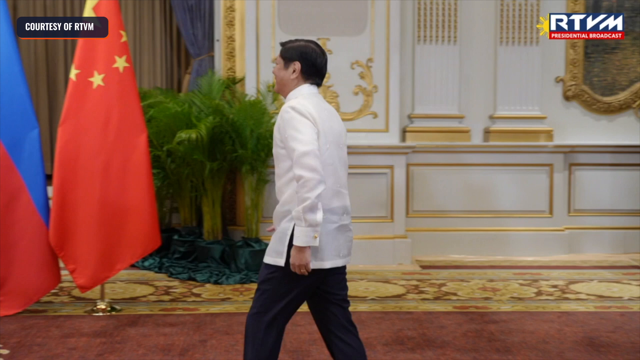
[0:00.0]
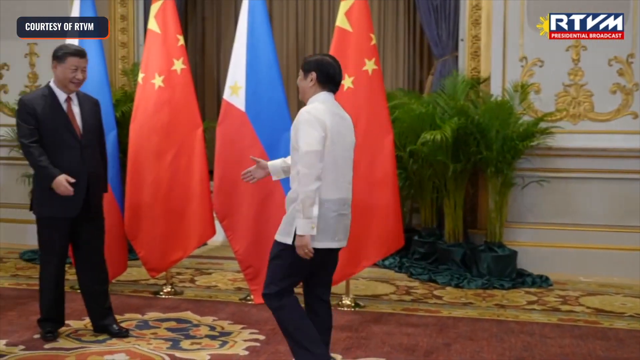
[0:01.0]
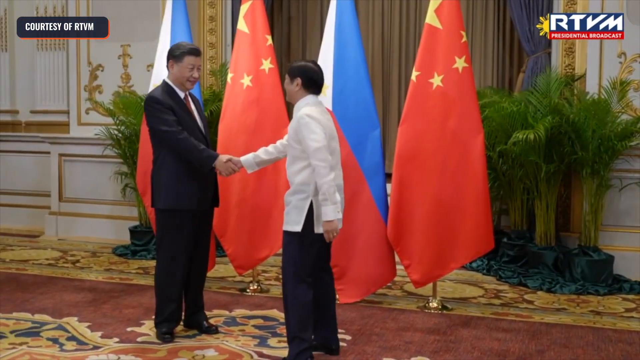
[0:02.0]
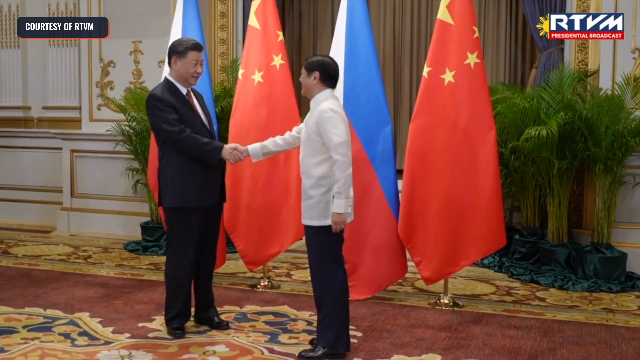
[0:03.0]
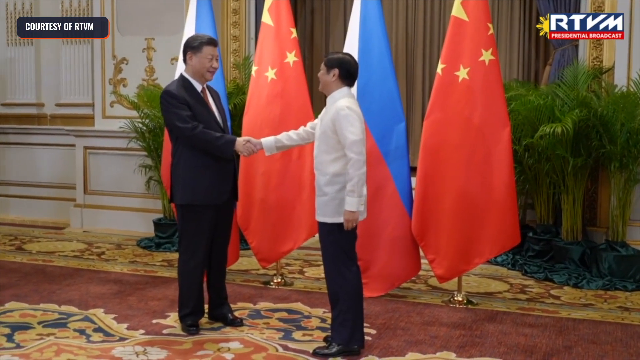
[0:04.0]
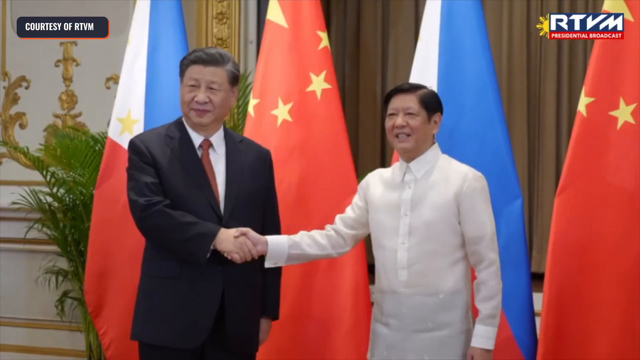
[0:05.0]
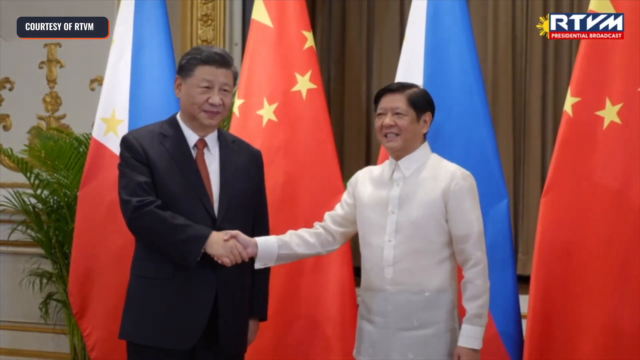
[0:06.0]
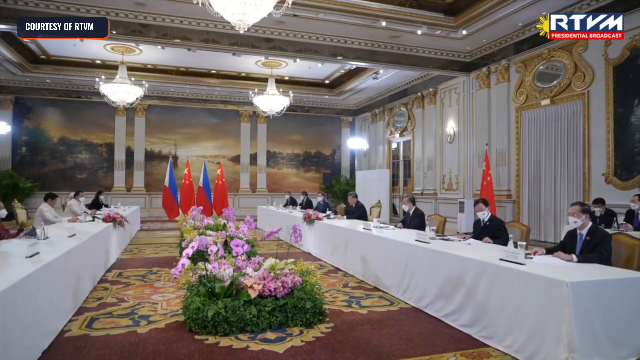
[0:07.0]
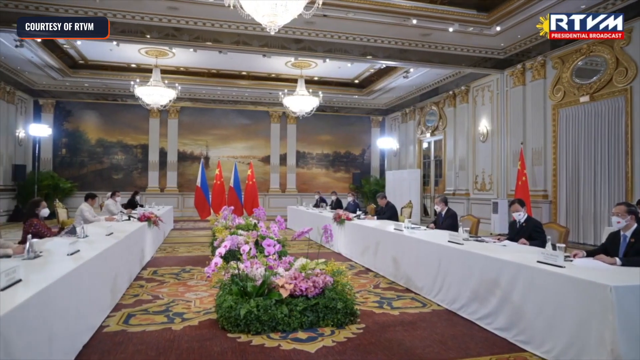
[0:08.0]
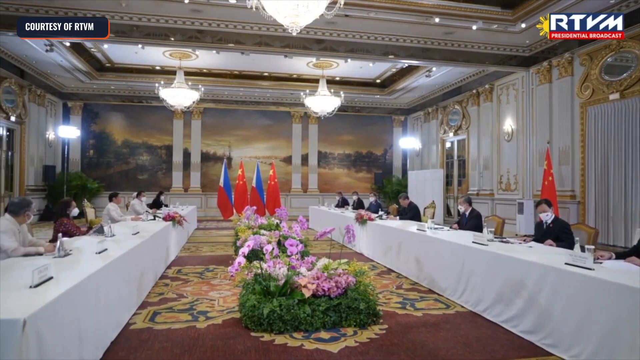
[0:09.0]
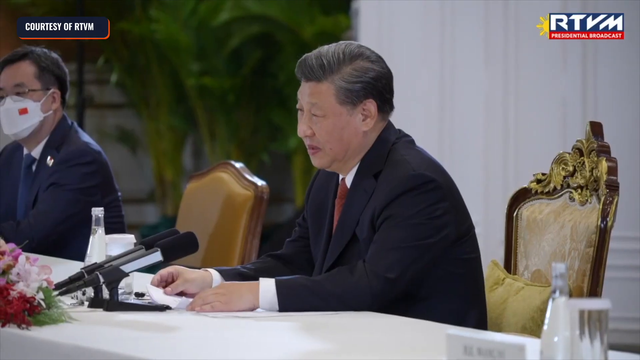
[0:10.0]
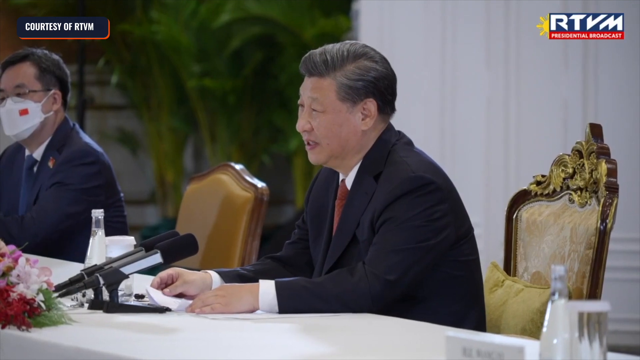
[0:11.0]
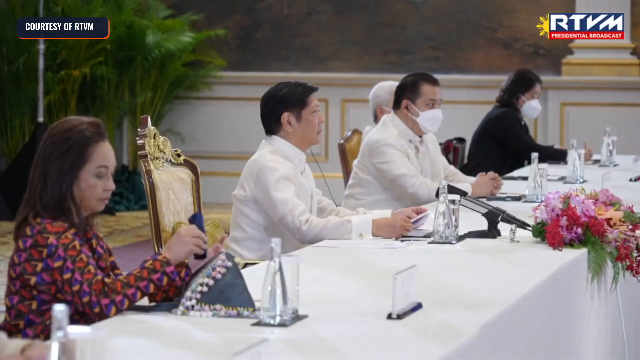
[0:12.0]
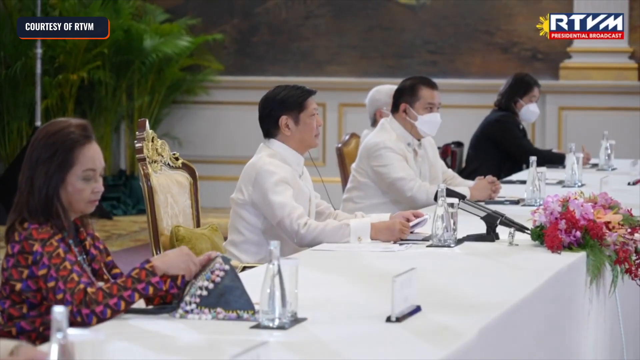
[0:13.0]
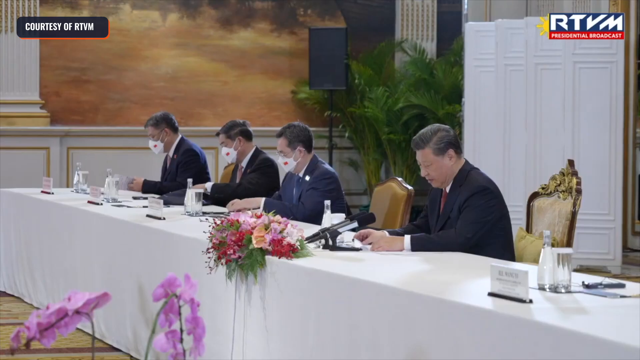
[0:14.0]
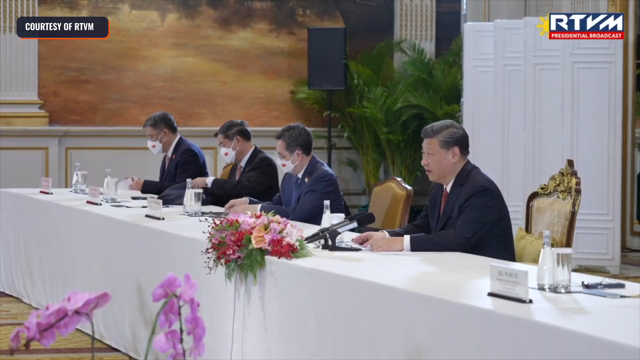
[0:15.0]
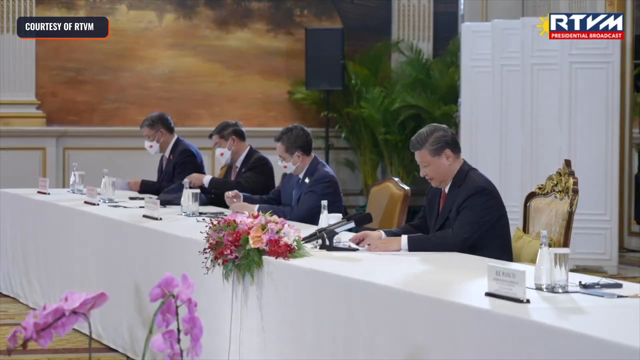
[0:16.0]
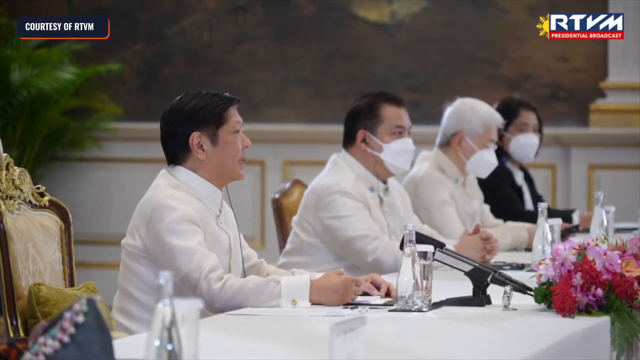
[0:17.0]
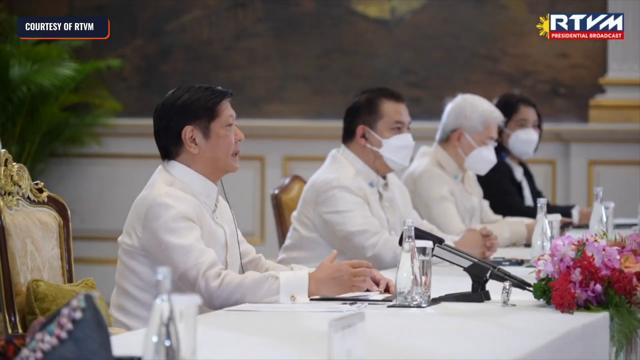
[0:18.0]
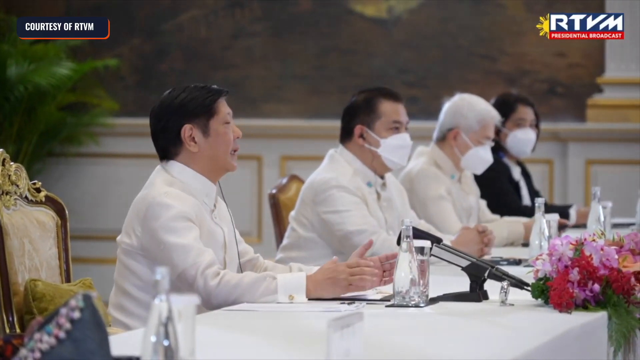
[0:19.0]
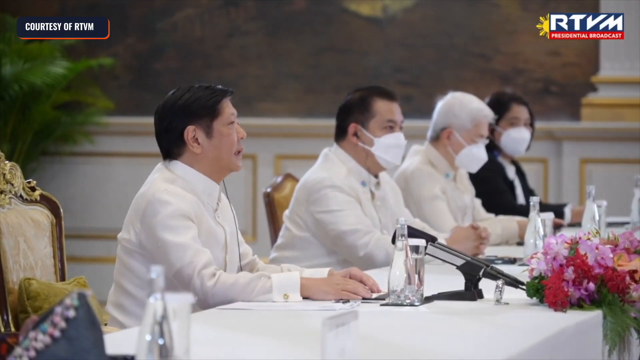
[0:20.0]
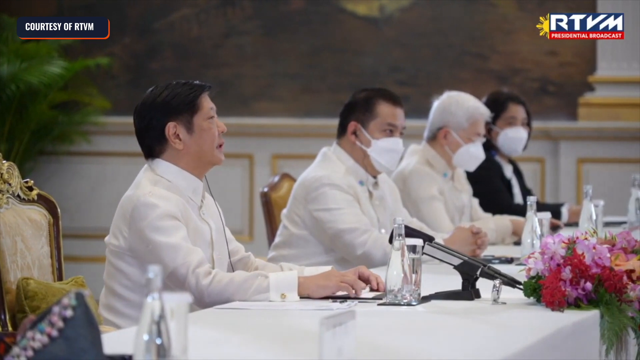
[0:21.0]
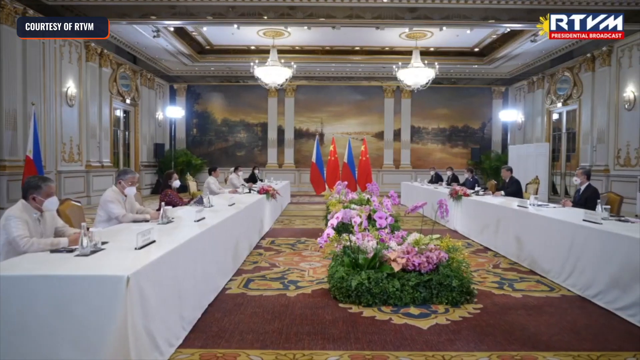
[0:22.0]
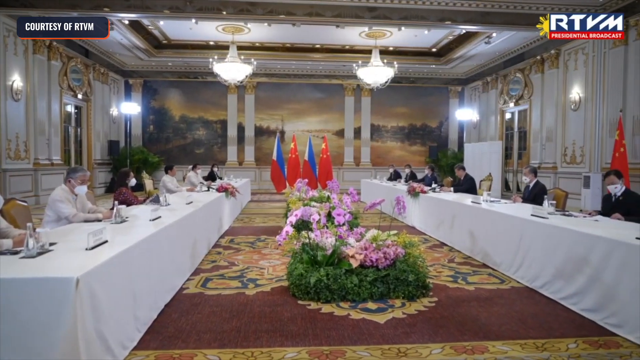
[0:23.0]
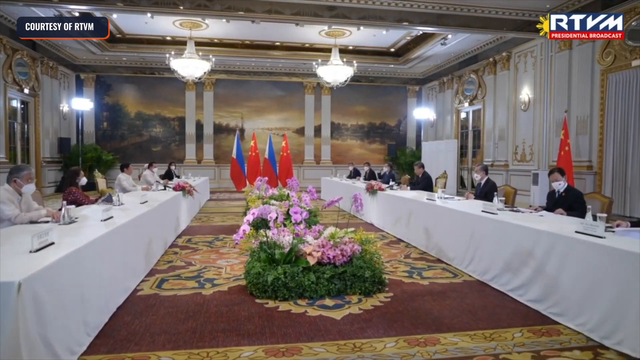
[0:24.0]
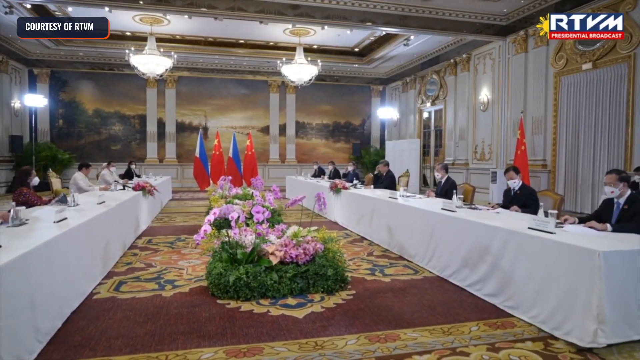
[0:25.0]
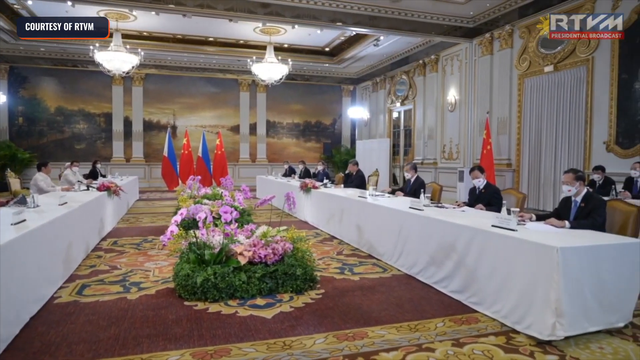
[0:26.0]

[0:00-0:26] The President of China meets with the leader of another Asian country, whose flag is possibly Malaysia's. In a large conference room, long white tables face each other, running down the length of the room, and the tables are draped with white tablecloths. The leaders sit in chairs having a conversation with each other, in what looks like an official meeting room, probably of a presidential facility. Other officials sit alongside the presidents; these supporting officials wear masks, while the two presidents, who are talking back and forth with each other, do not. The delegation on the side of the possibly Malaysian flag wears white, while the leaders on the Chinese side wear black suits. The conversation seems pleasant, with the participants appearing to have pleasant looks on their faces. There is an ornate rug on the floor and the chairs they are sitting in.